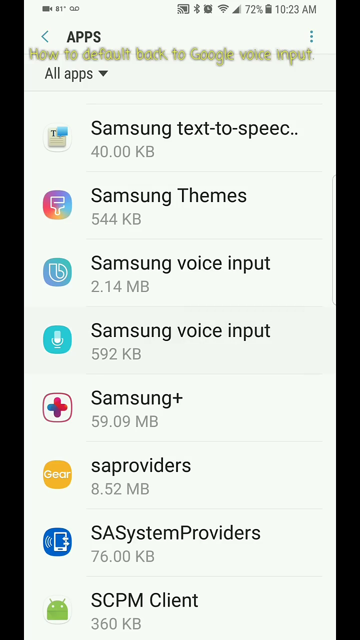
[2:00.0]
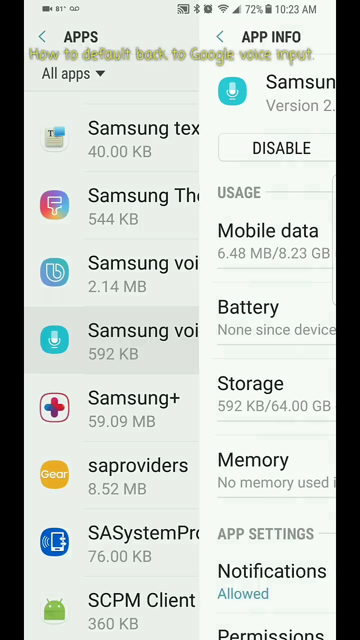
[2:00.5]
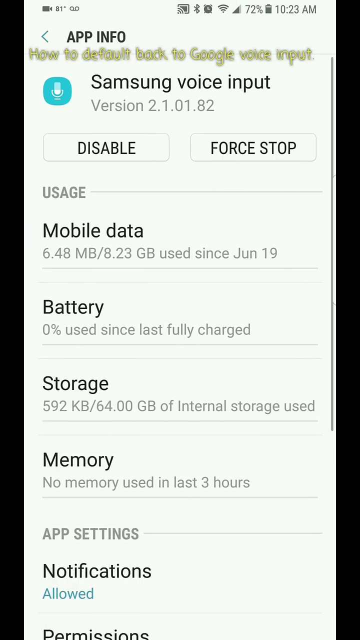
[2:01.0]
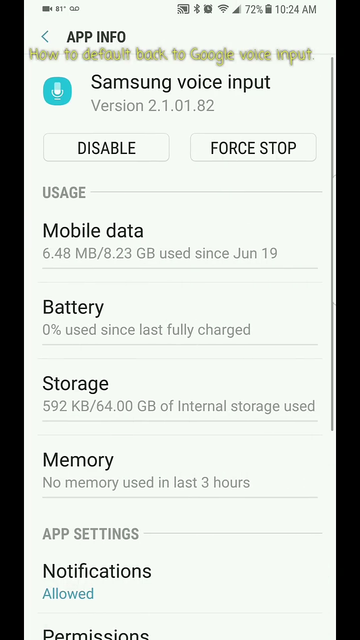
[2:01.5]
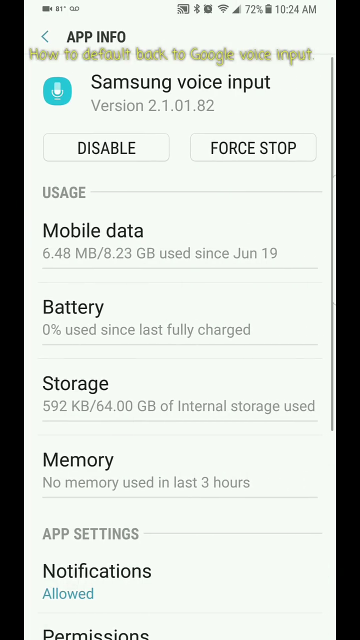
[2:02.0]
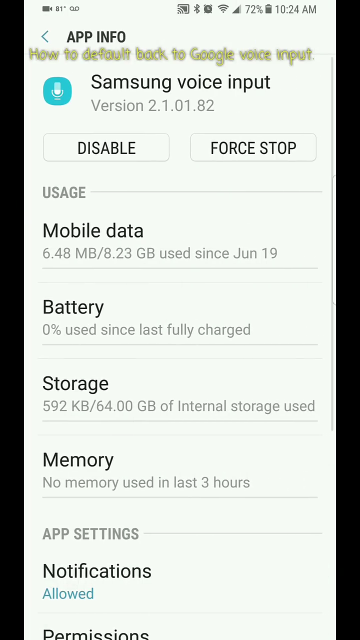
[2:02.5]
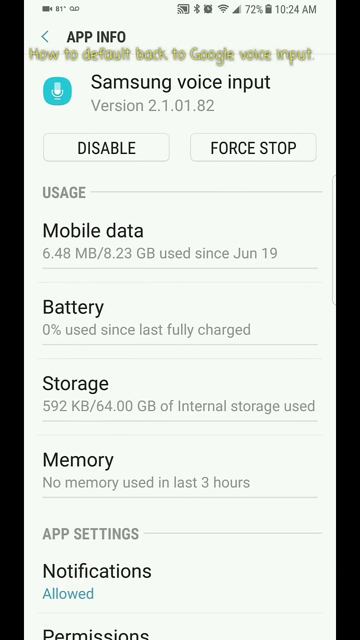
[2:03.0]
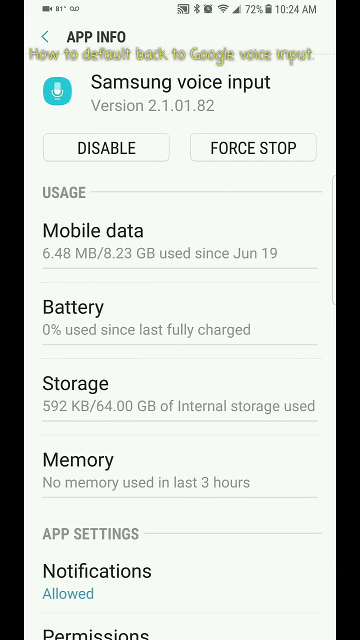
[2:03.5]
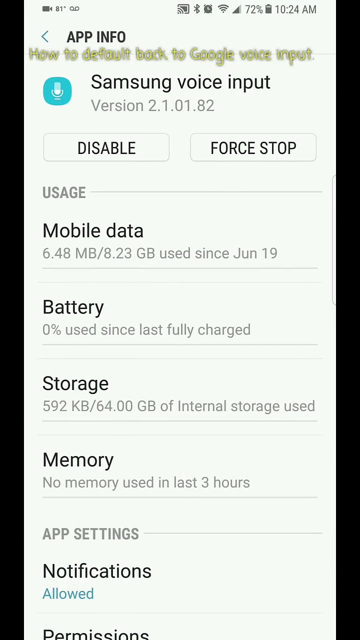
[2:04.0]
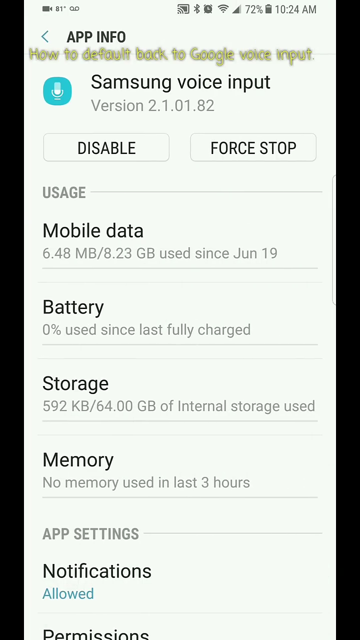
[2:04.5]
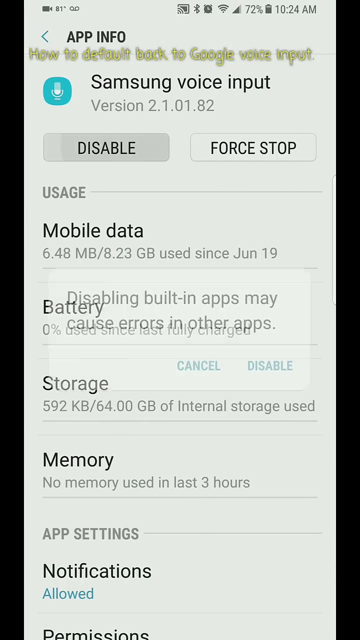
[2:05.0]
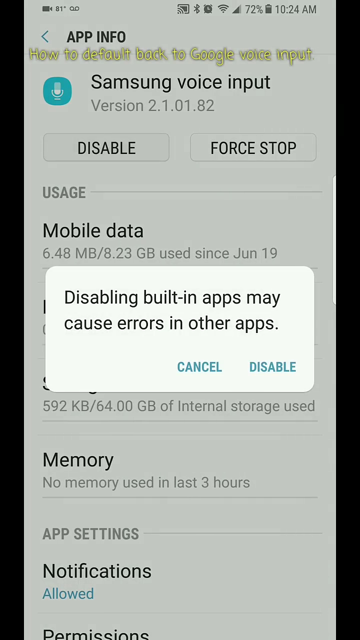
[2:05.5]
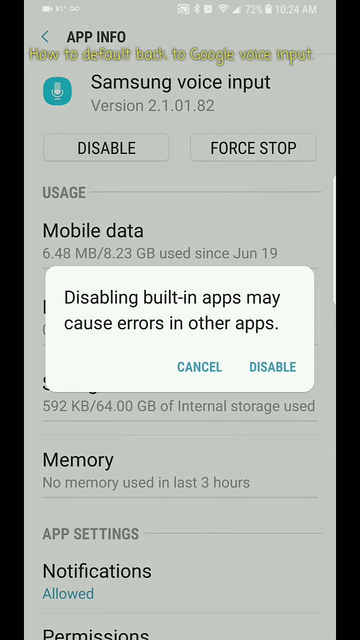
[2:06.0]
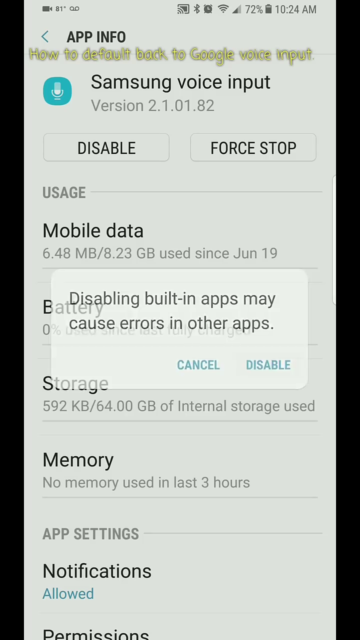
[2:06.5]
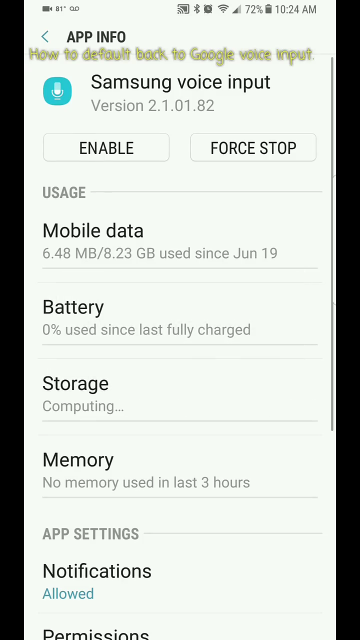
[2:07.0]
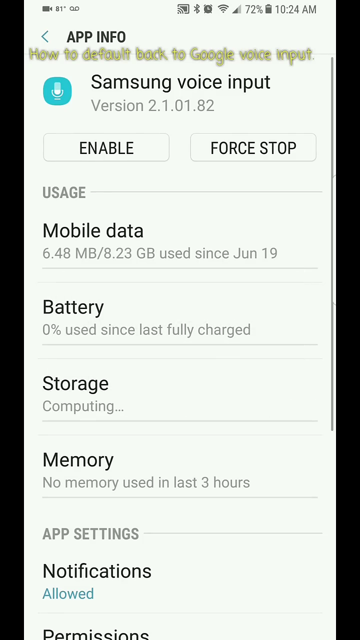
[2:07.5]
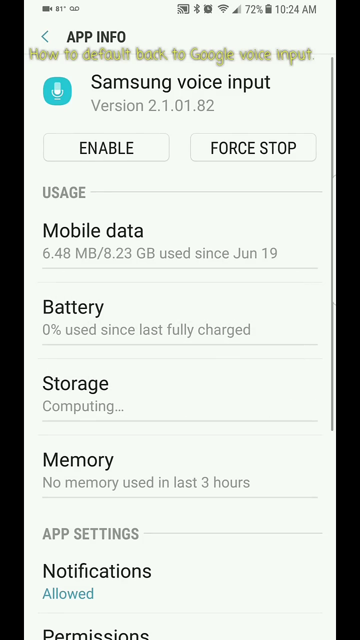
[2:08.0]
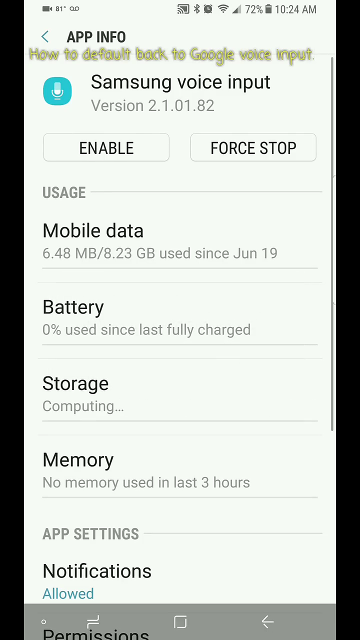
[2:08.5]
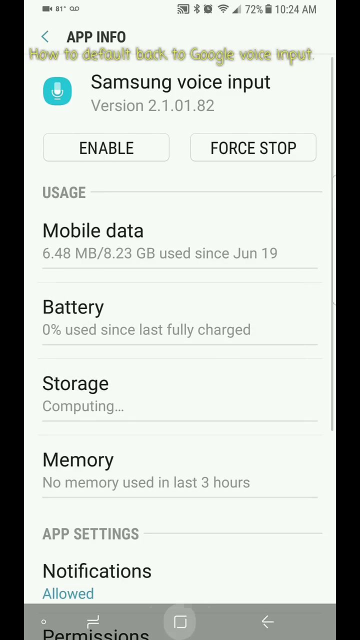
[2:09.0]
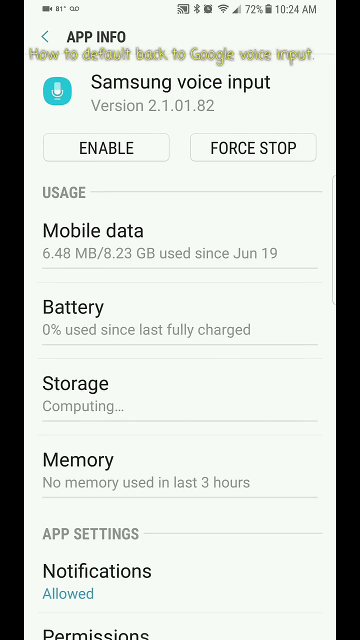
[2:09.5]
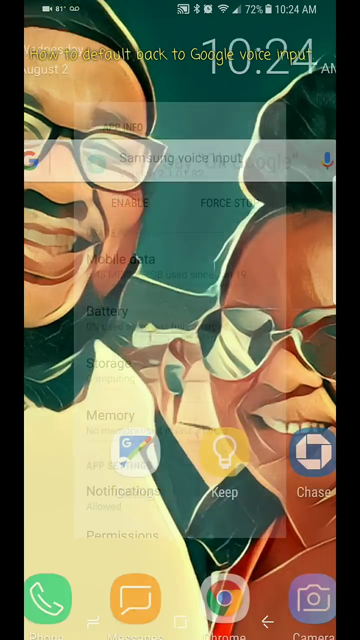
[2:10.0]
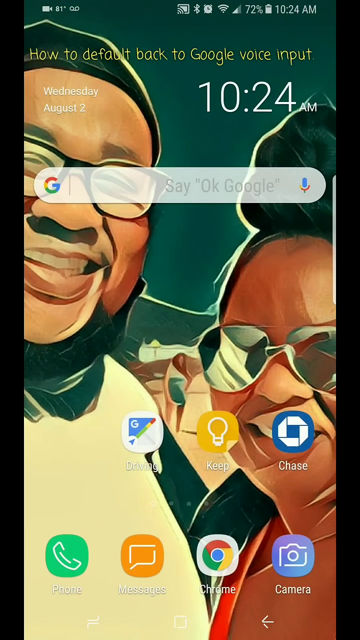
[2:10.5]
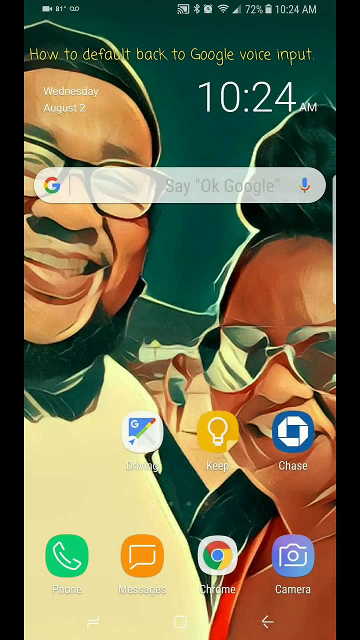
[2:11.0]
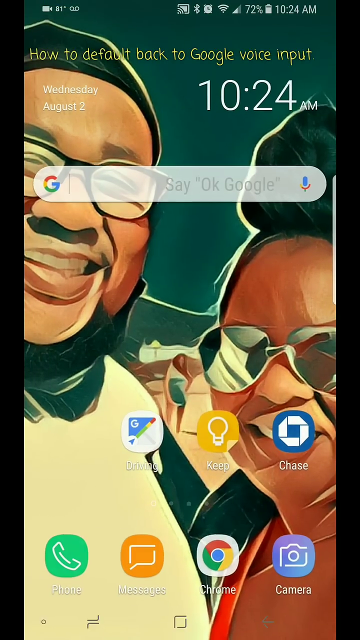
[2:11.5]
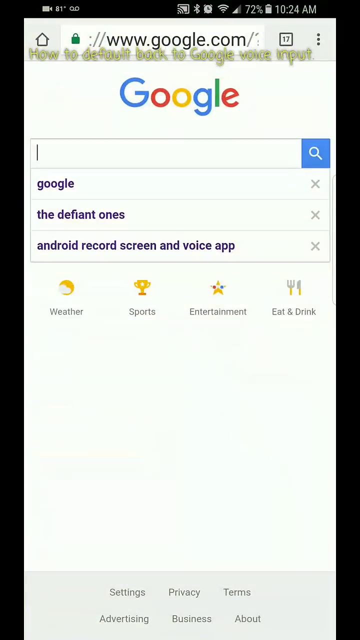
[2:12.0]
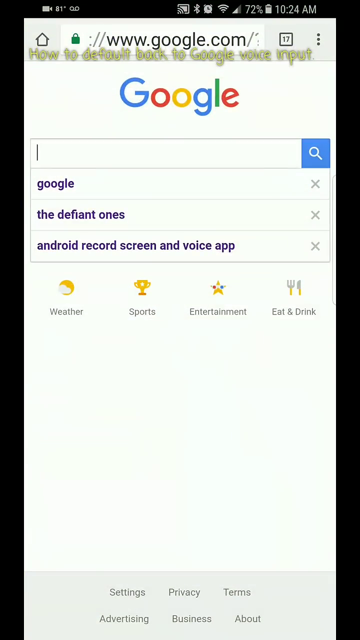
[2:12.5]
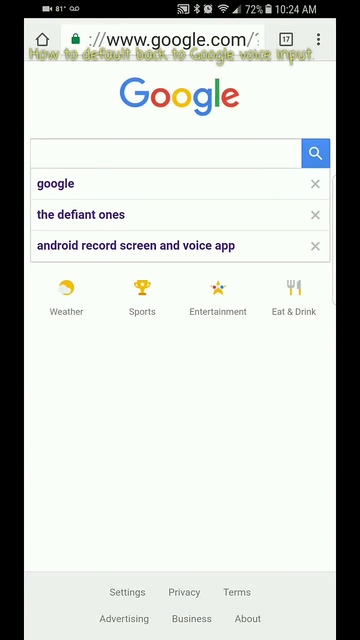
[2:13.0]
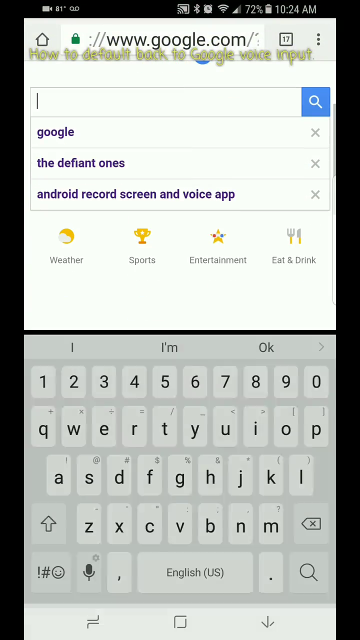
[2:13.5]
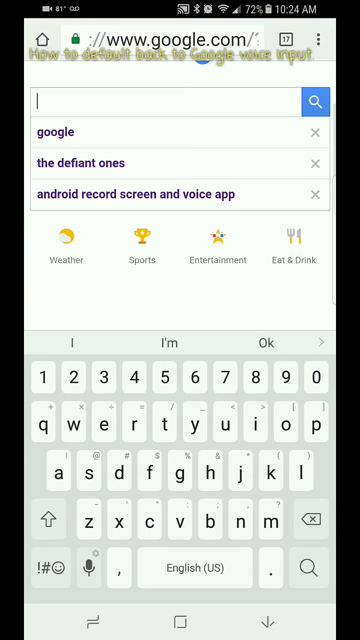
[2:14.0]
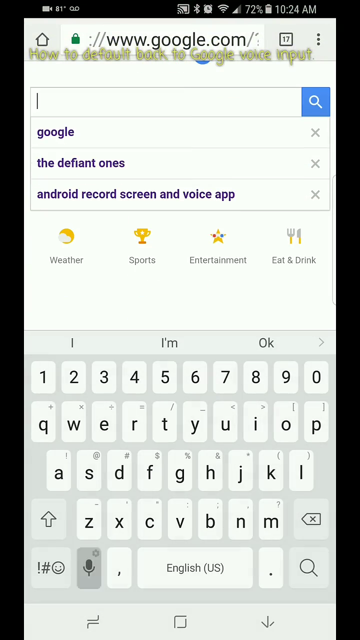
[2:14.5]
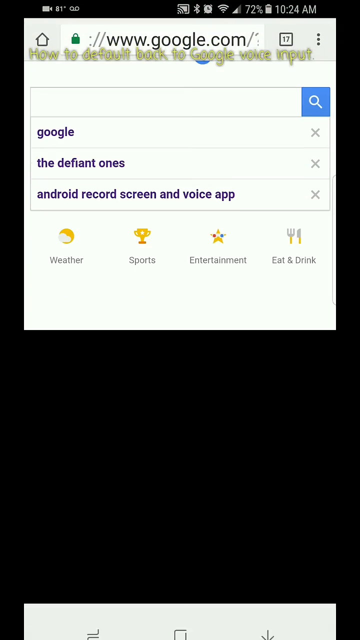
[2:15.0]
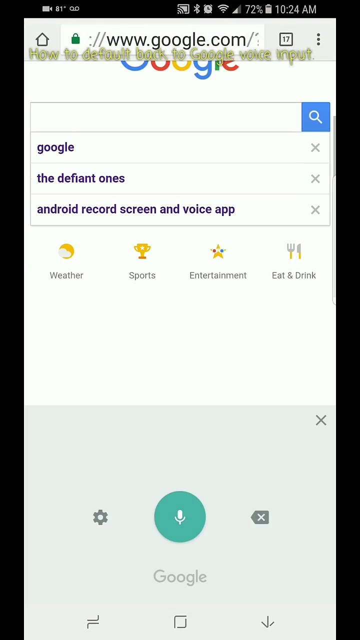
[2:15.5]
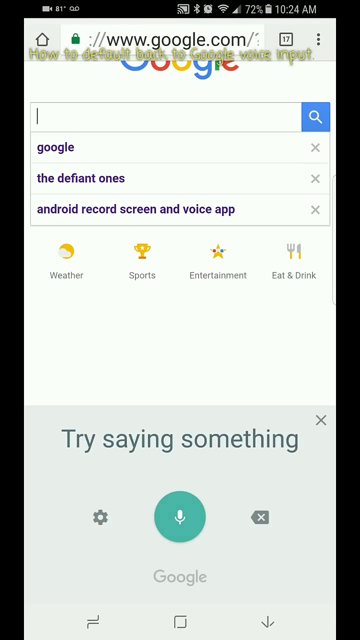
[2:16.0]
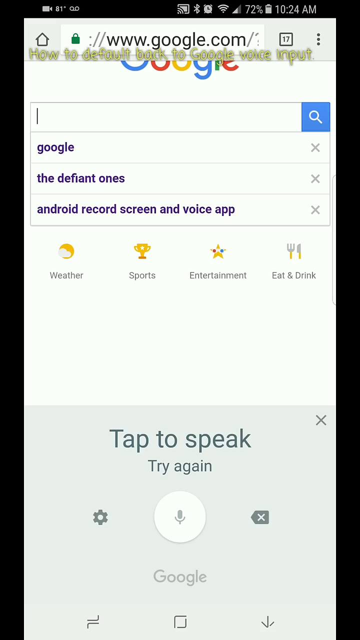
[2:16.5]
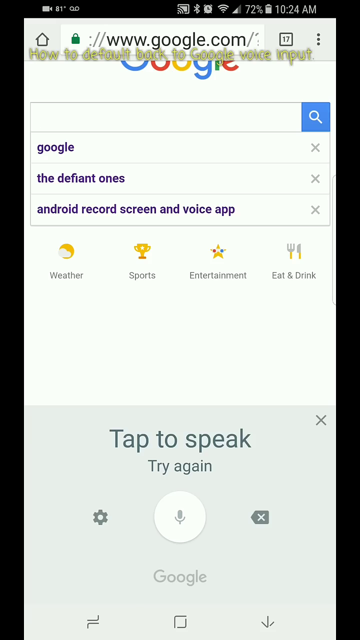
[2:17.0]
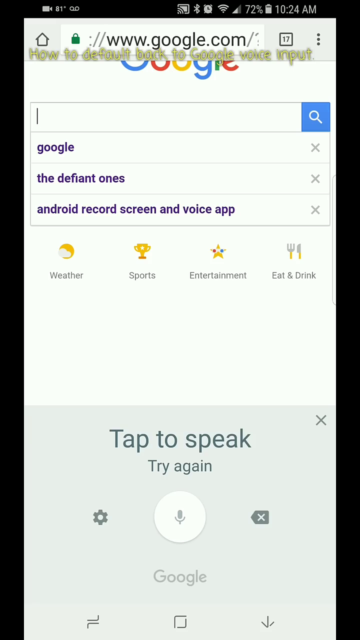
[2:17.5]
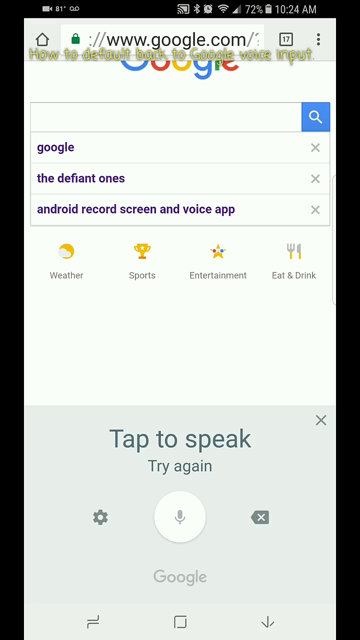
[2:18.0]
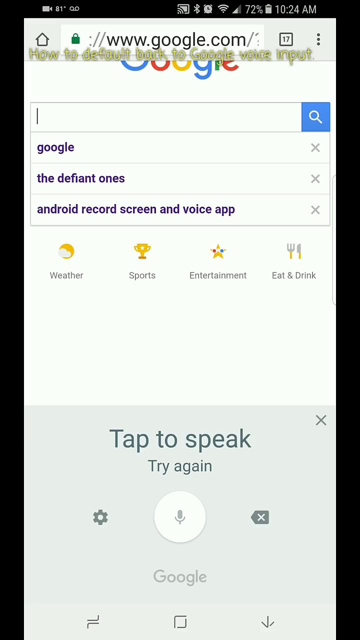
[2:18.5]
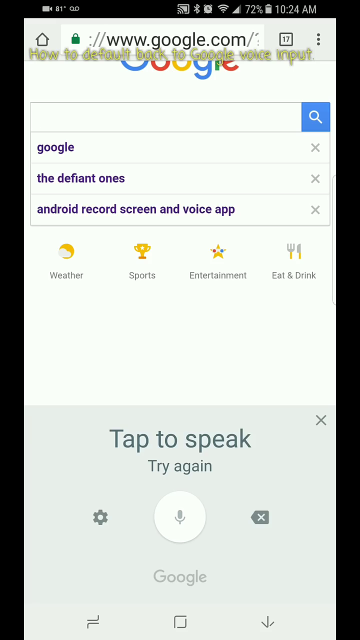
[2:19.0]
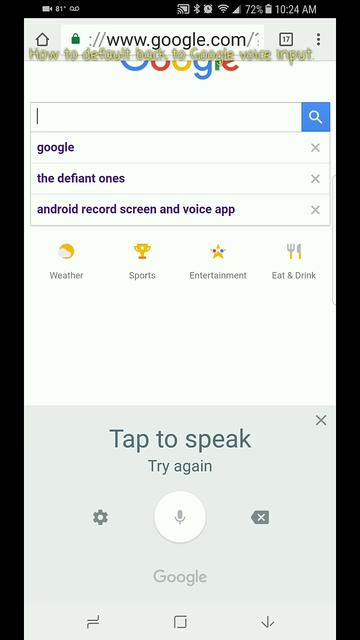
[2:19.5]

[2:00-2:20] The app info page opens for Samsung voice input, which has a small white speaker on a teal background and shows version 2.1. There are disable and force stop buttons. Under usage, mobile data shows usage since June, battery shows 0%, and storage and memory are listed. The user apparently clicks disable, since a pop-up warns that disabling built-in apps could cause problems with other apps, with cancel and disable options in blue. The app, which was disabled, now shows as enabled at the top, and the storage line reads "computing" in gray with dots. The user exits to the wallpaper with the two posing figures, then returns to Google and starts typing before switching to speaking; at the bottom, in blue, "tap to speak" appears, and apparently the speech is not caught, as it says "try again".